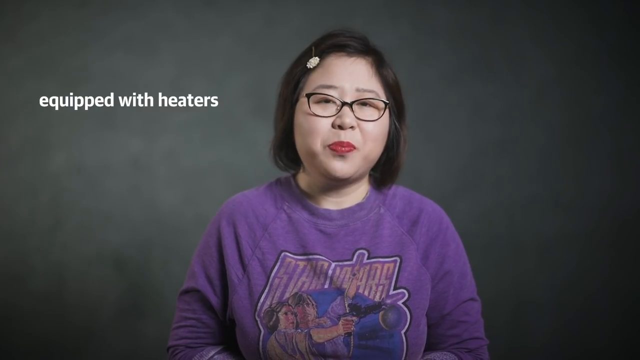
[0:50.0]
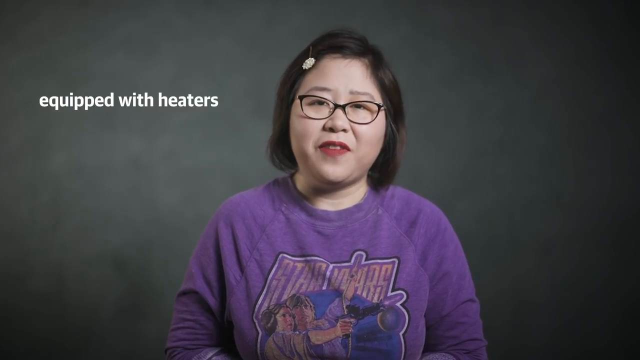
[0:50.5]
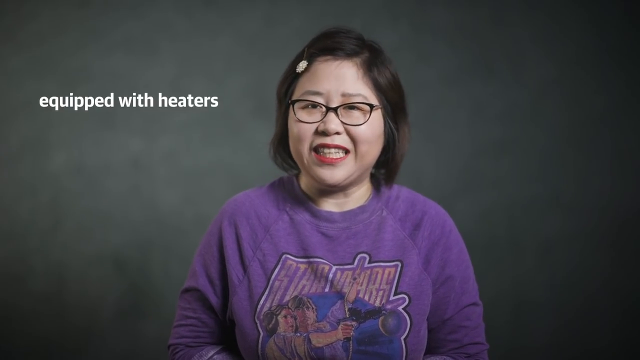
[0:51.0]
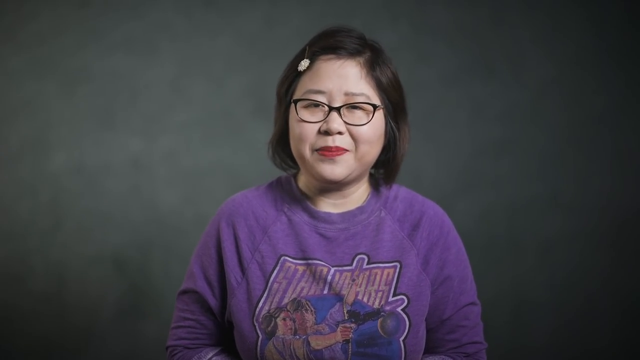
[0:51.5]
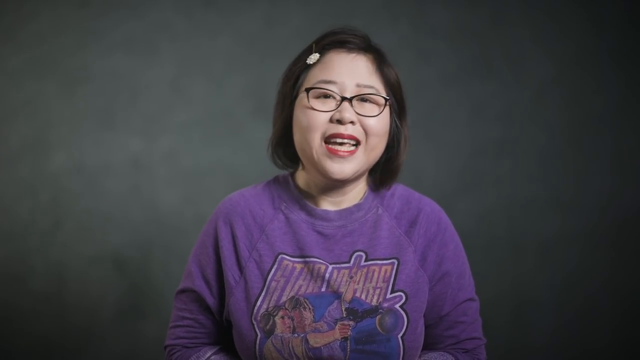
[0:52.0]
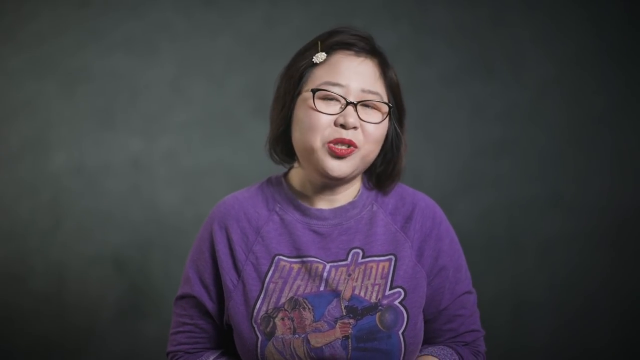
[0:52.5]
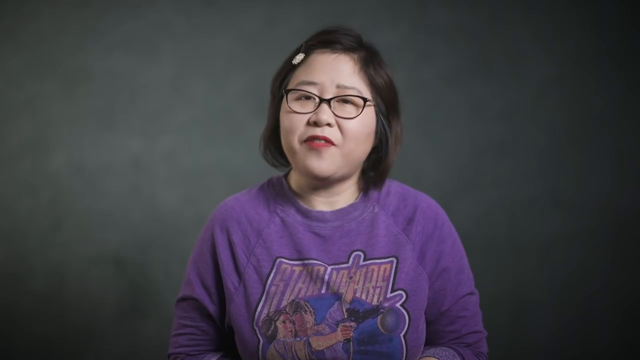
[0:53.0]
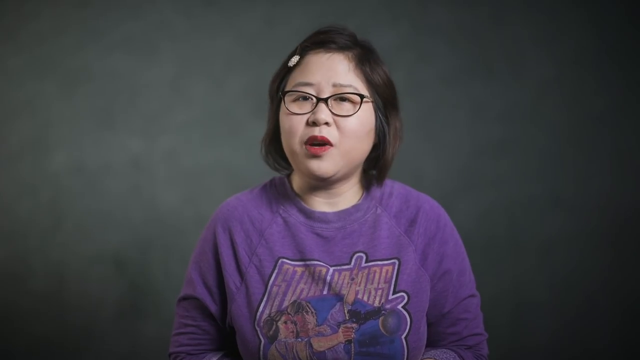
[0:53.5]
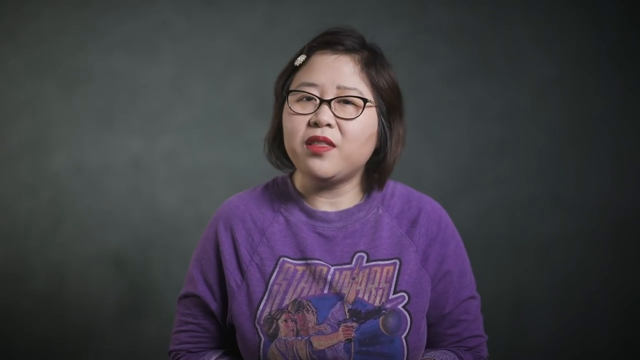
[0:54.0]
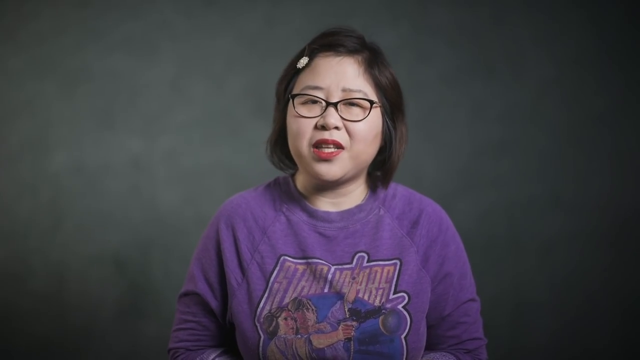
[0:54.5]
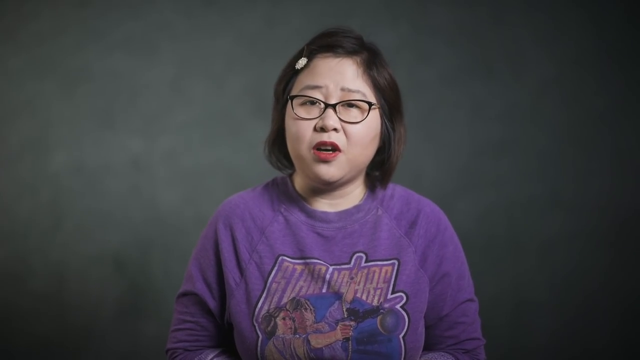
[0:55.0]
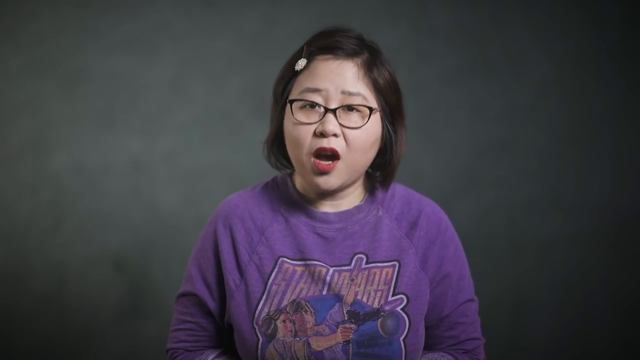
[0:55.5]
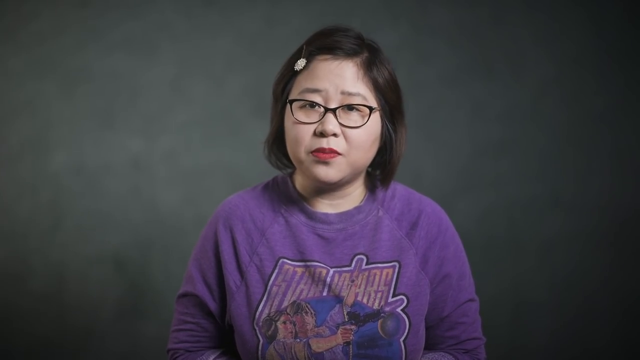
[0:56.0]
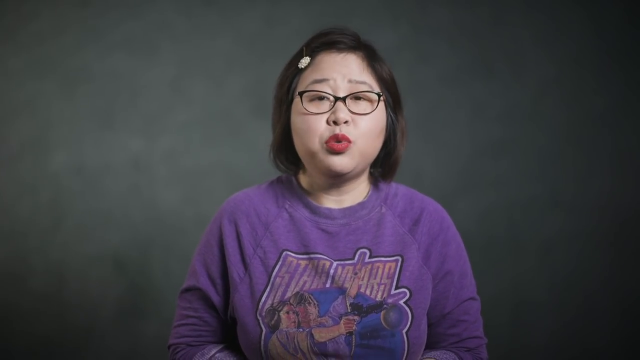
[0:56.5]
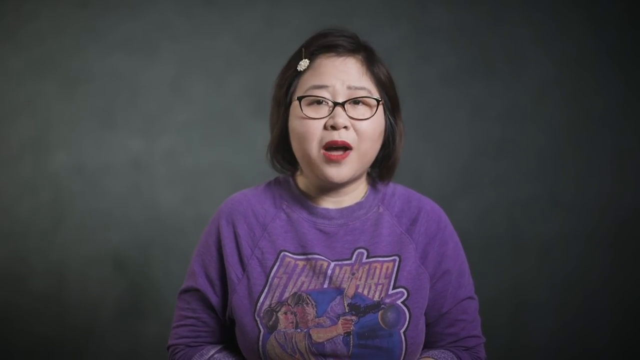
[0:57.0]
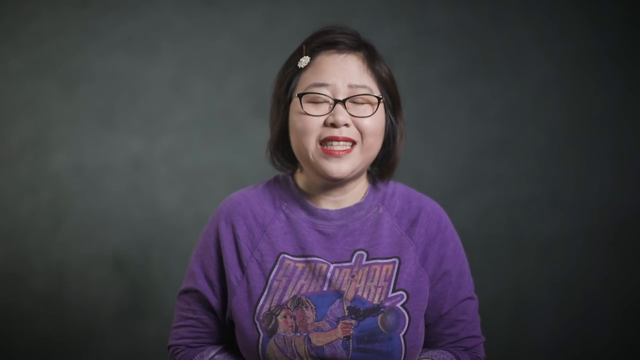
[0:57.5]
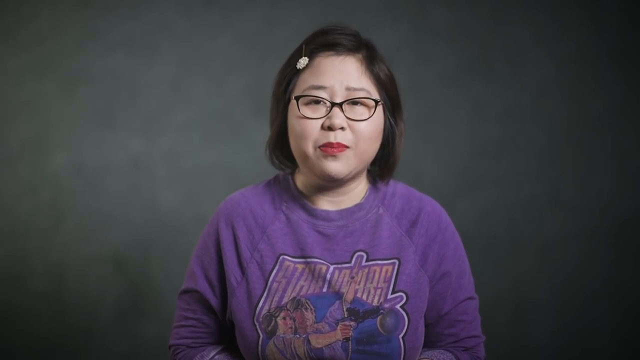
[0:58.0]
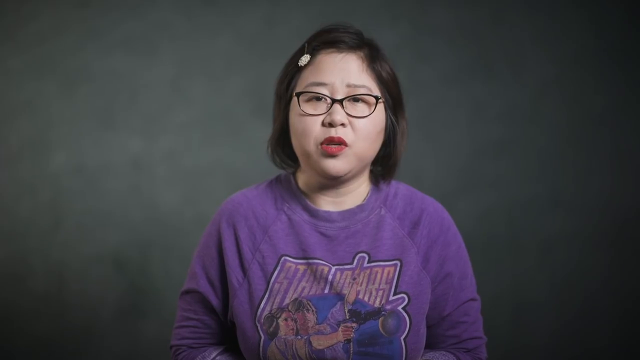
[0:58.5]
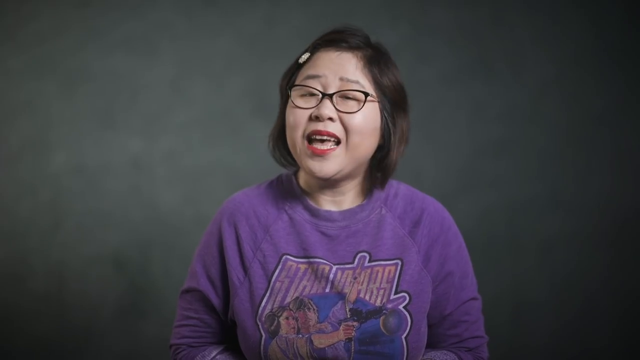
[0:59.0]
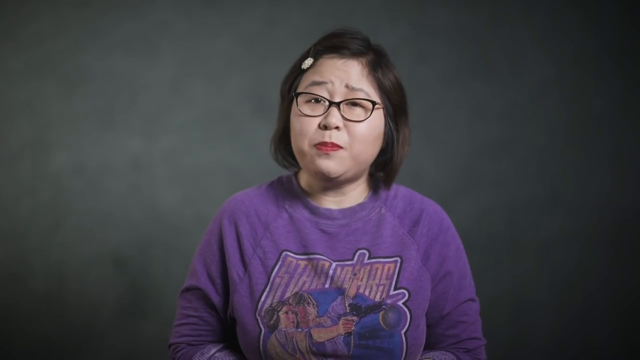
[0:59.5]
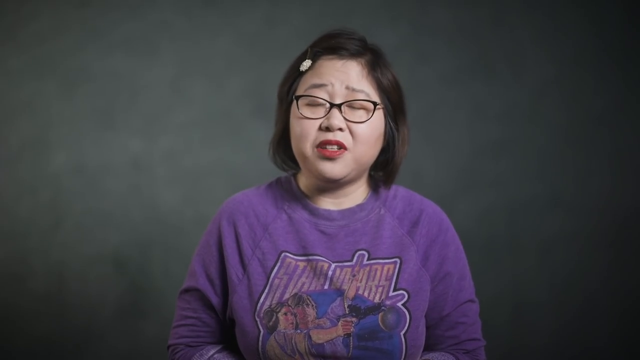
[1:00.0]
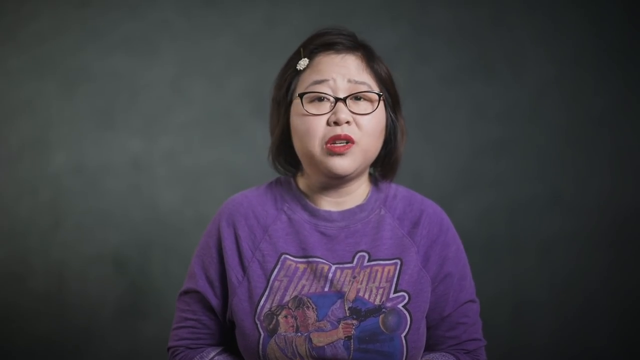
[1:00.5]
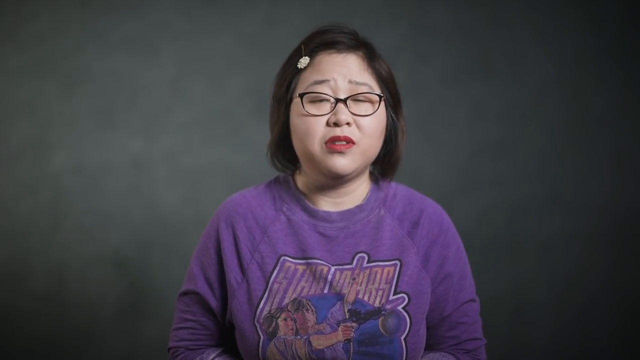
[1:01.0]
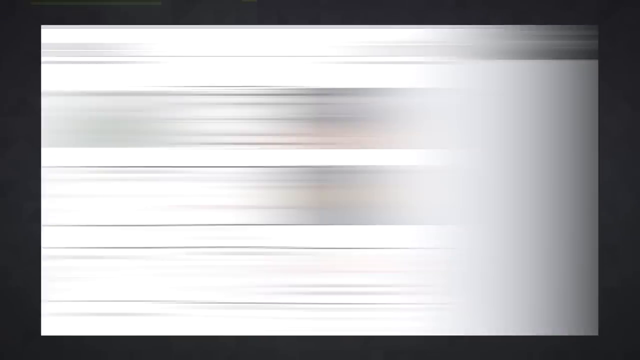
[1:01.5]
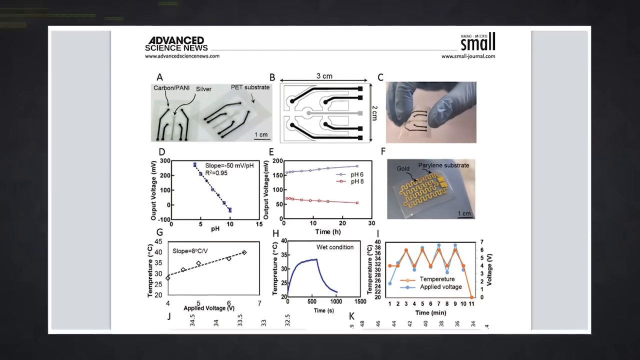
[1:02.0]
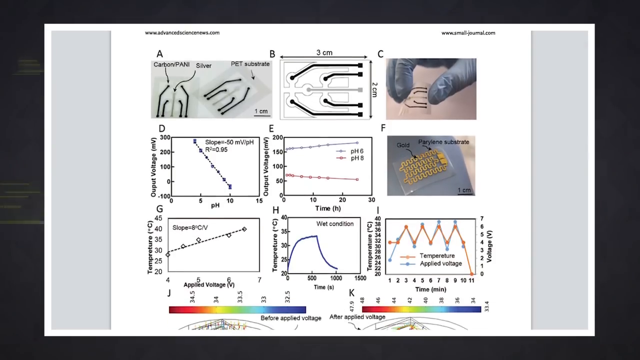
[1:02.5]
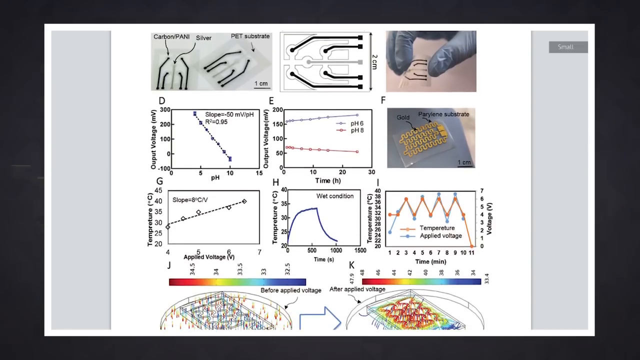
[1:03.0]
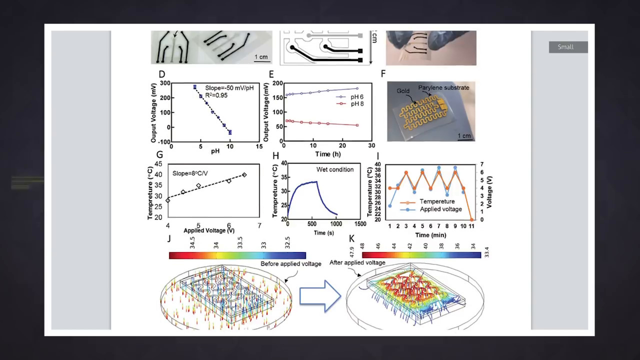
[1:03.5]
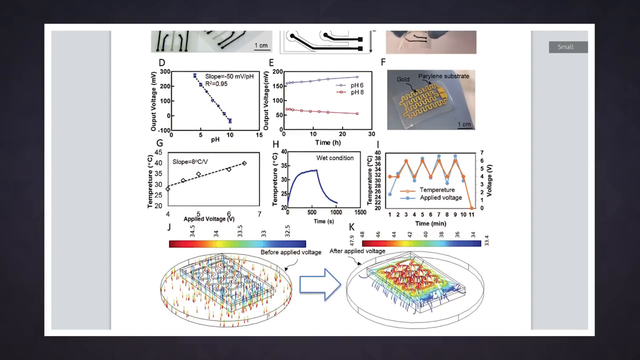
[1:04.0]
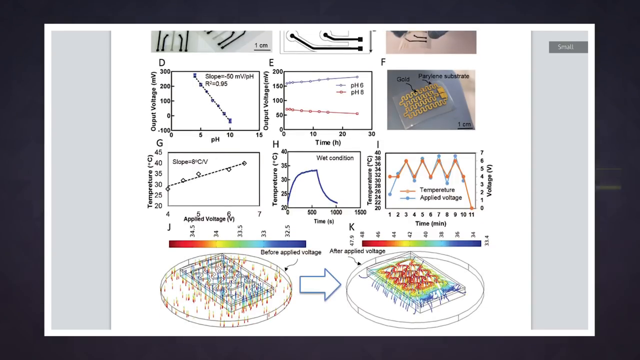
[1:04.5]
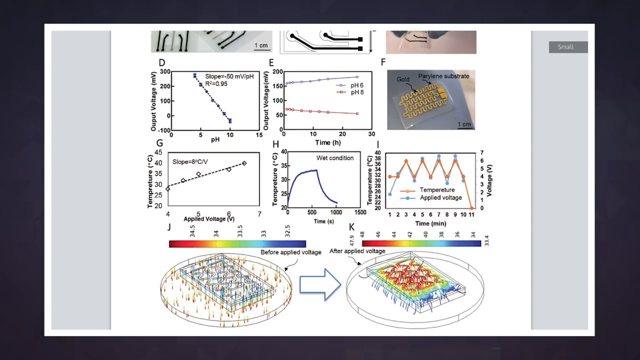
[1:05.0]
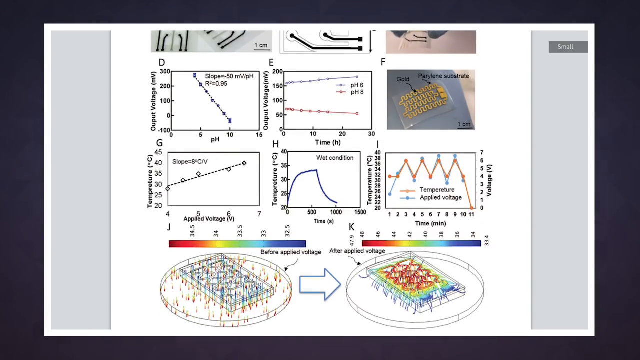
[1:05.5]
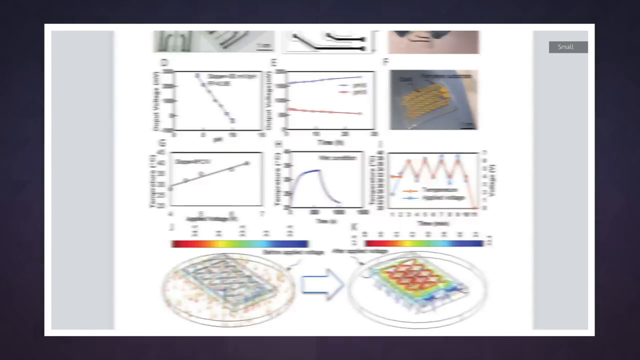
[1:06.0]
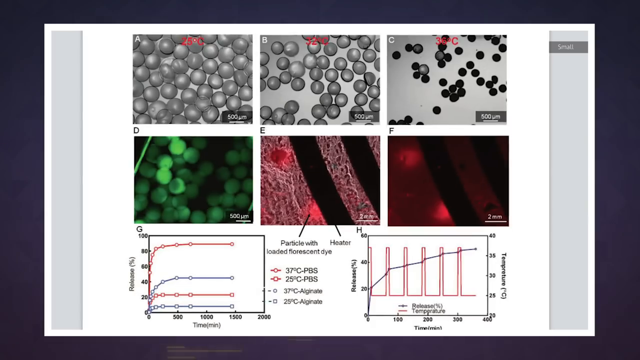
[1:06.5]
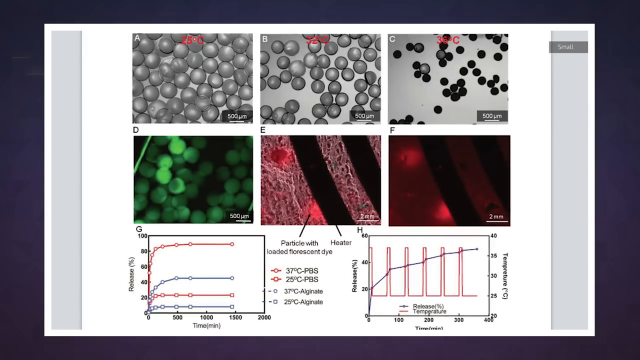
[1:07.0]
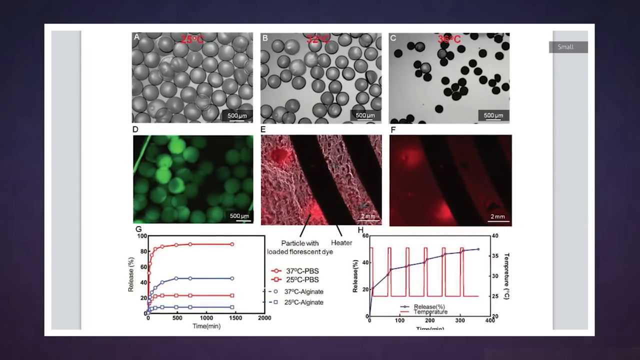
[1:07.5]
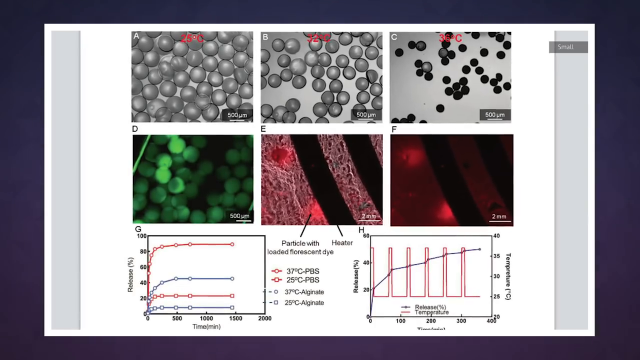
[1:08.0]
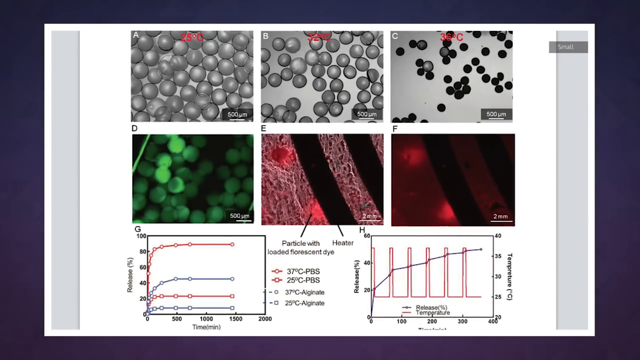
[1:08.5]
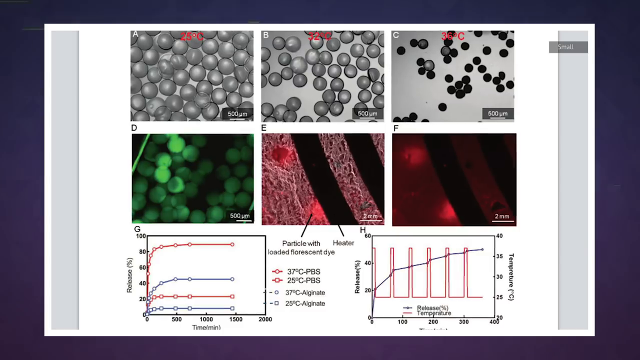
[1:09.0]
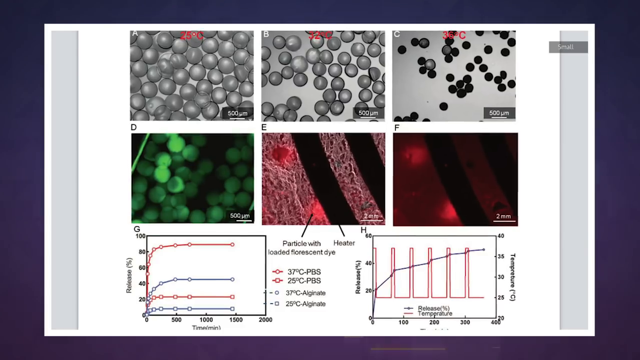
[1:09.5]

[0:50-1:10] An Asian woman is in center frame, wearing what looks like a purple Star Wars shirt, dark glasses and red lipstick, with text to her left reading "equipped with heaters" and a gray background behind her. The shot holds on her for quite a while as she continues speaking. The video then moves to technical material on how the bandage works: various graphs, diagrams, the gold patch itself with gold coils, and a clear patch. Toward the top right, someone's gloved hand is kind of holding what almost looks like possibly an adhesive part with a sensor. Pages of literature illustrate how it works, with text at the bottom along the lines of "before applied voltage" and "after applied voltage," seemingly showing how it conducts; the shot lingers on this for a while. A series of images follows showing what look like round circles, apparently relating to various temperatures, along with graphs and circles in shades of gray, green and red: A and B at the top are gray circles, C is black circles, D is green circles, E is red with narrow black strips, and F shows a red background with some black. This possibly concerns the heating element of the bandage, and the shot lingers on it for quite a while.